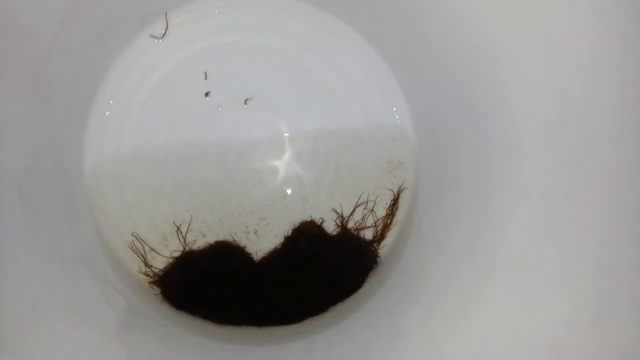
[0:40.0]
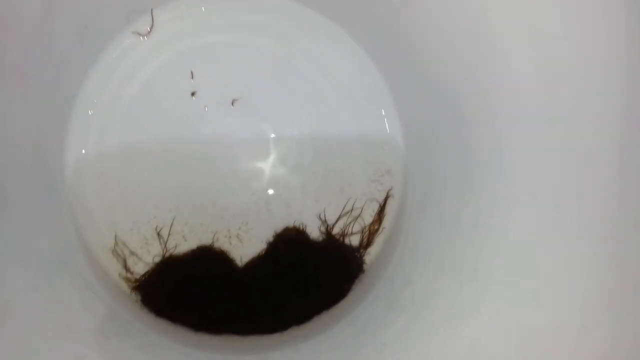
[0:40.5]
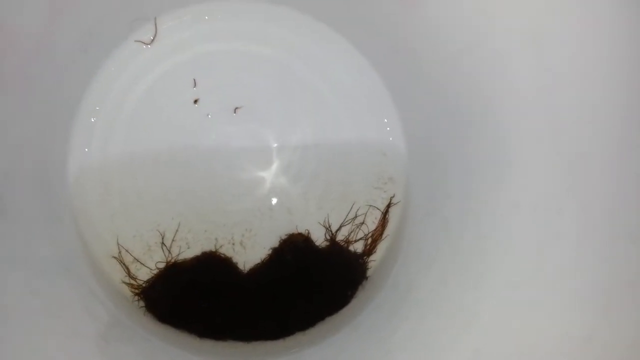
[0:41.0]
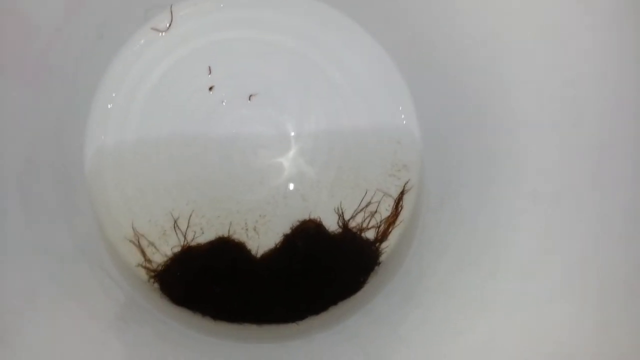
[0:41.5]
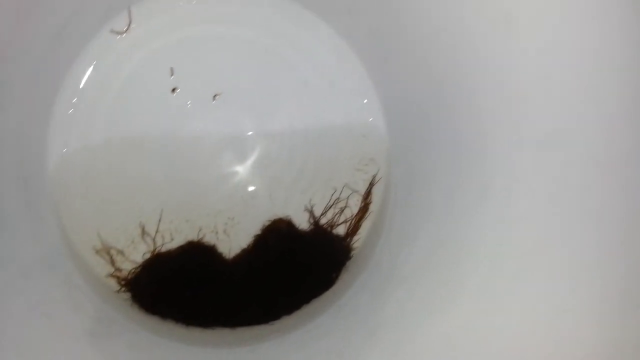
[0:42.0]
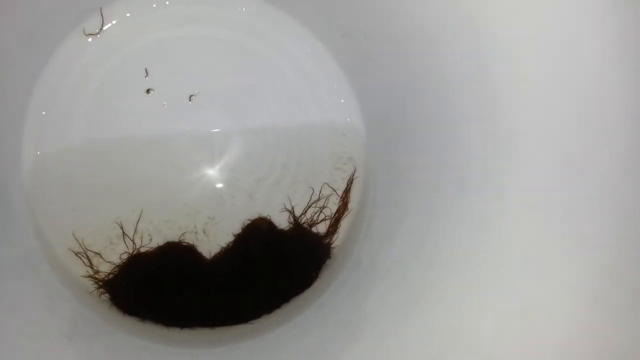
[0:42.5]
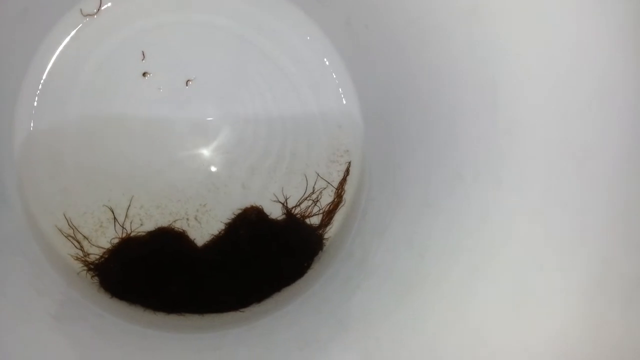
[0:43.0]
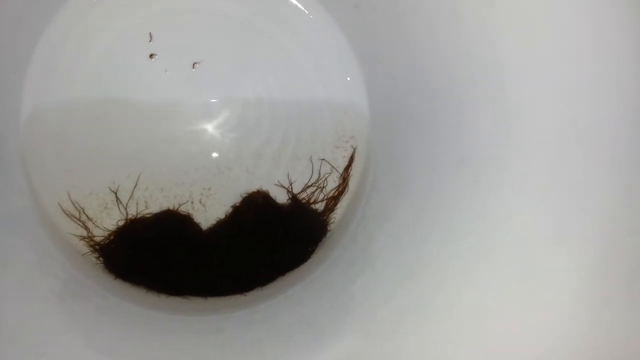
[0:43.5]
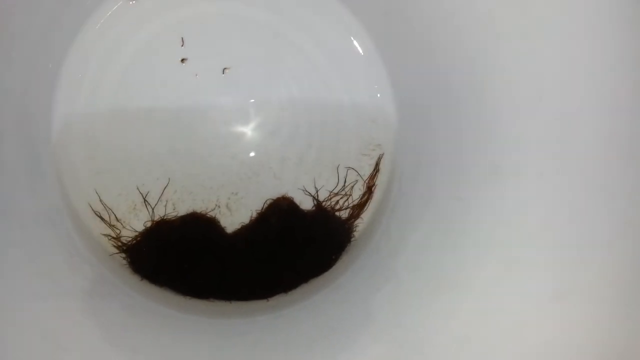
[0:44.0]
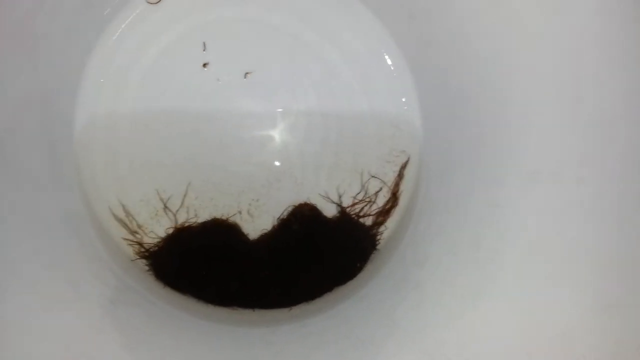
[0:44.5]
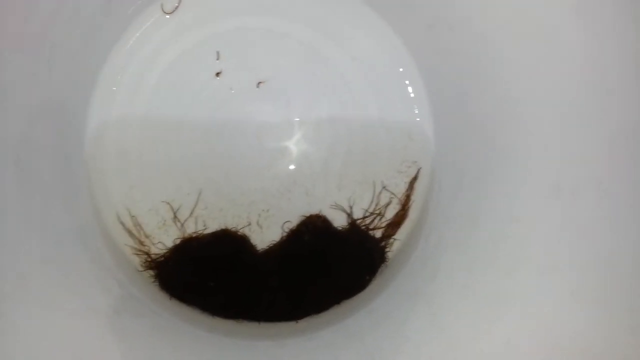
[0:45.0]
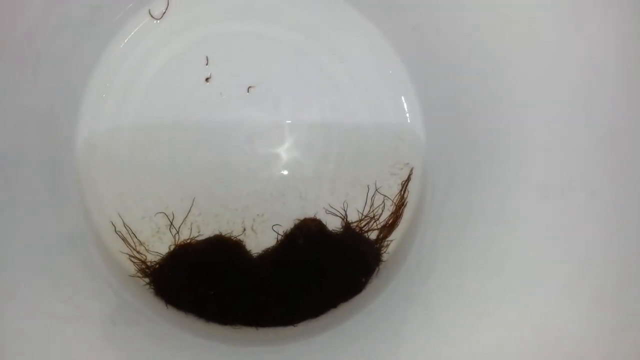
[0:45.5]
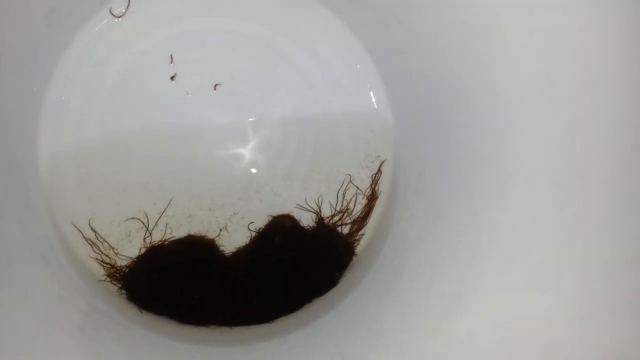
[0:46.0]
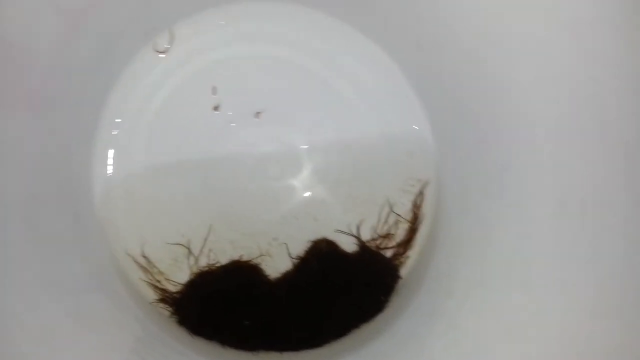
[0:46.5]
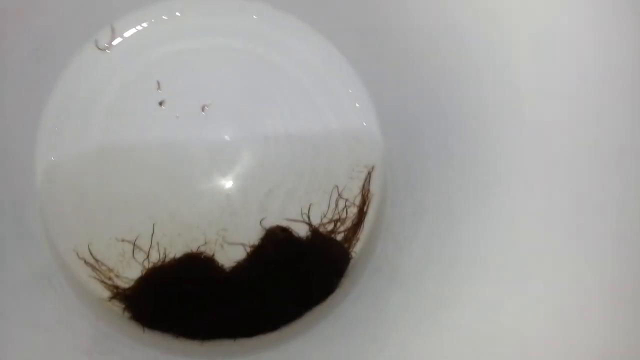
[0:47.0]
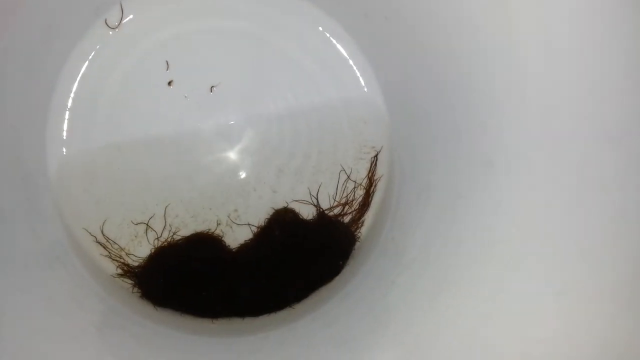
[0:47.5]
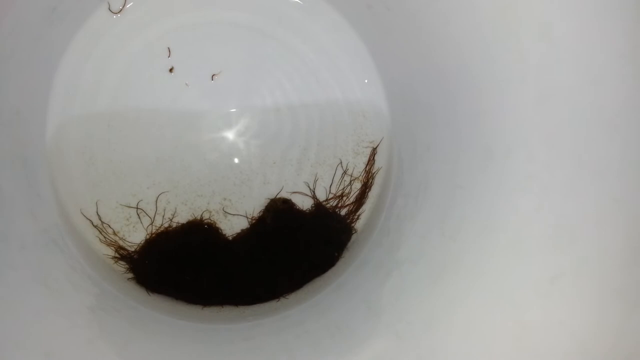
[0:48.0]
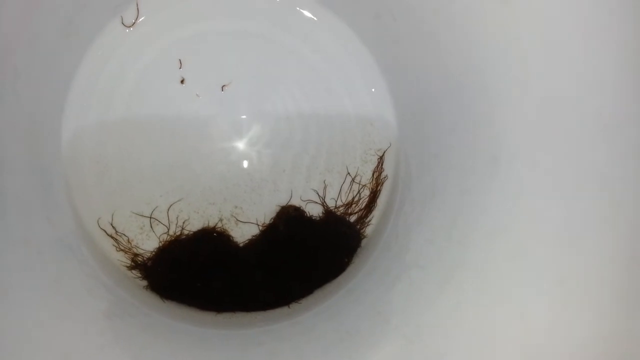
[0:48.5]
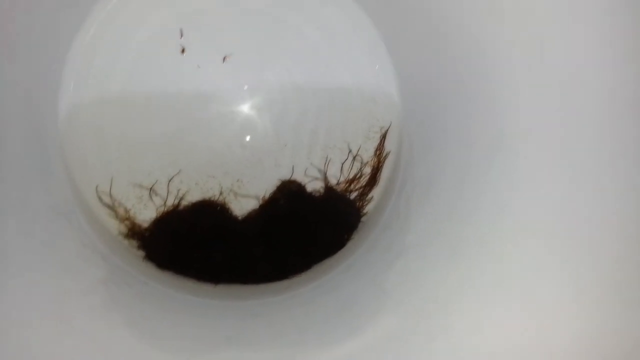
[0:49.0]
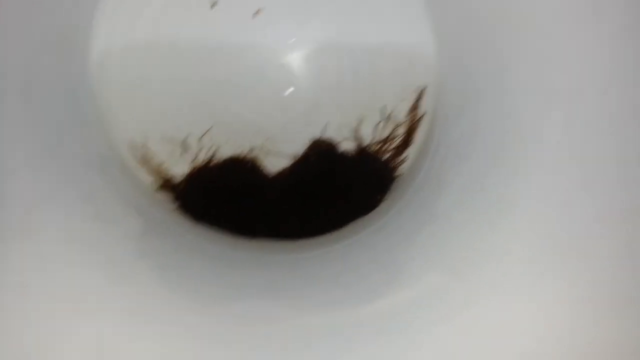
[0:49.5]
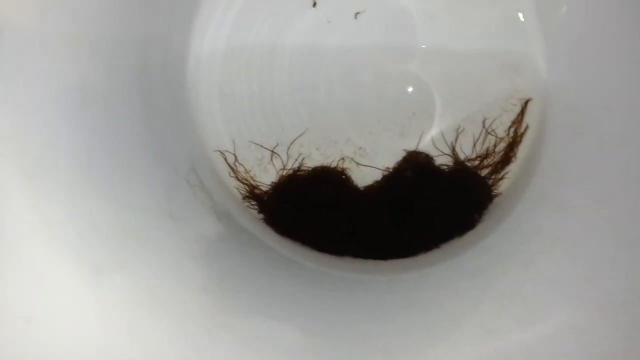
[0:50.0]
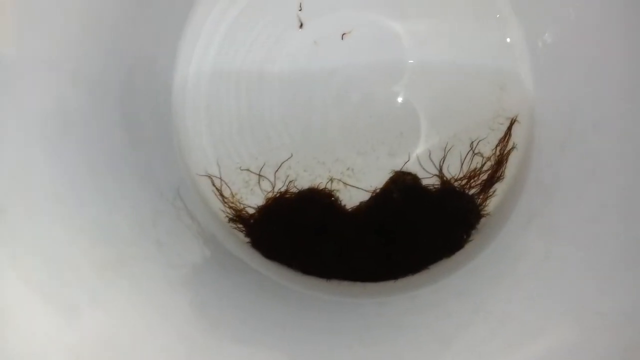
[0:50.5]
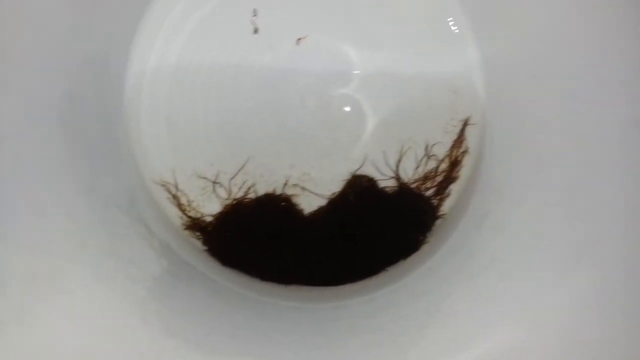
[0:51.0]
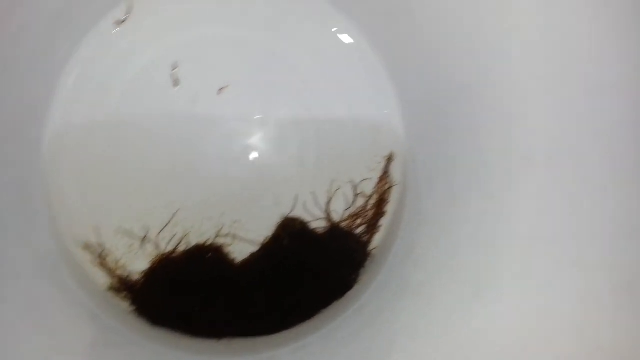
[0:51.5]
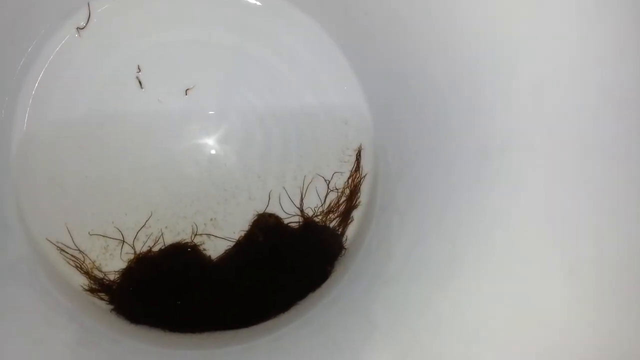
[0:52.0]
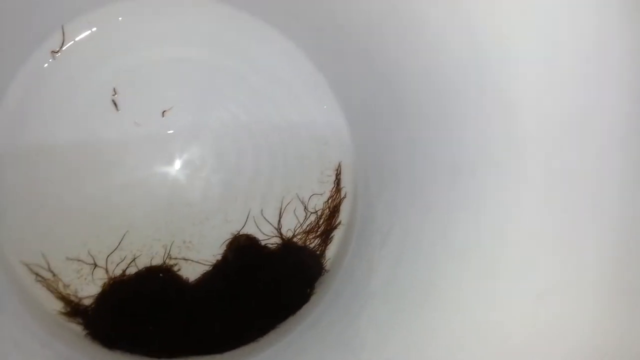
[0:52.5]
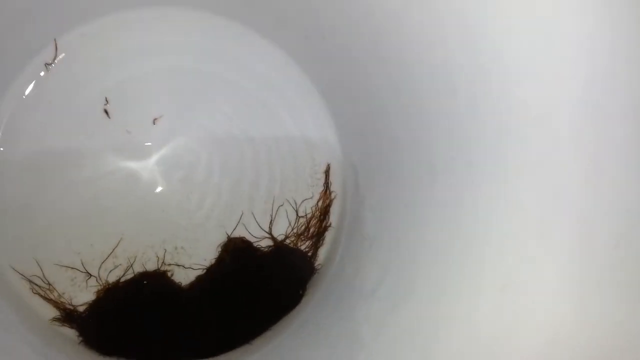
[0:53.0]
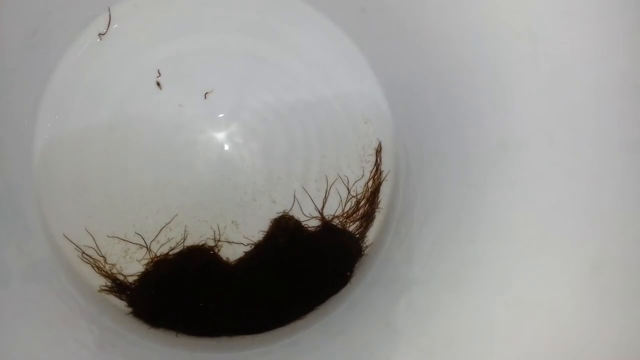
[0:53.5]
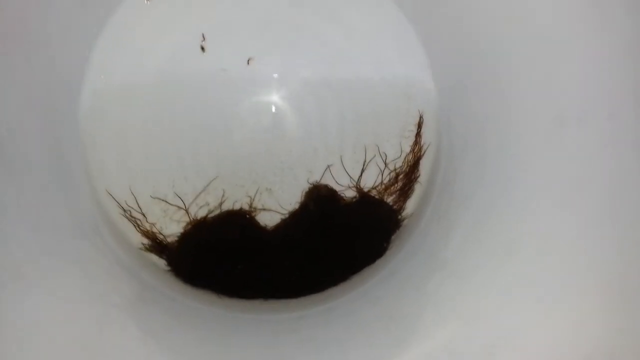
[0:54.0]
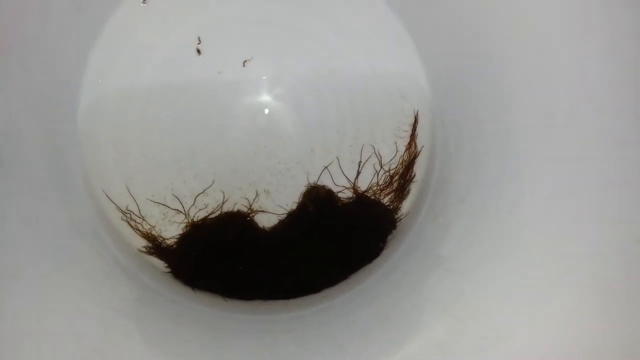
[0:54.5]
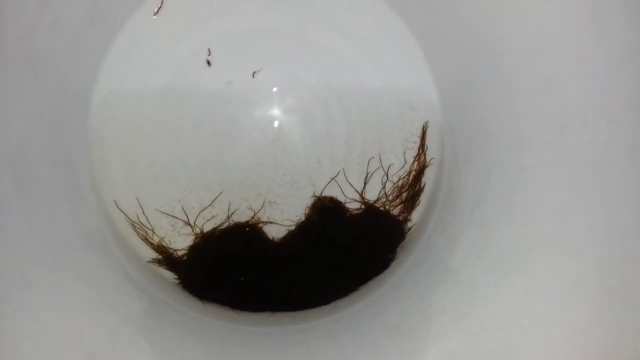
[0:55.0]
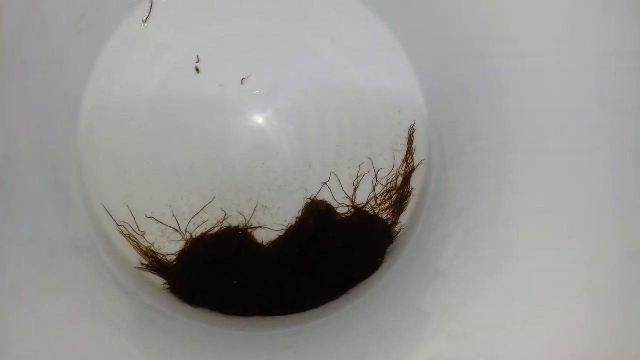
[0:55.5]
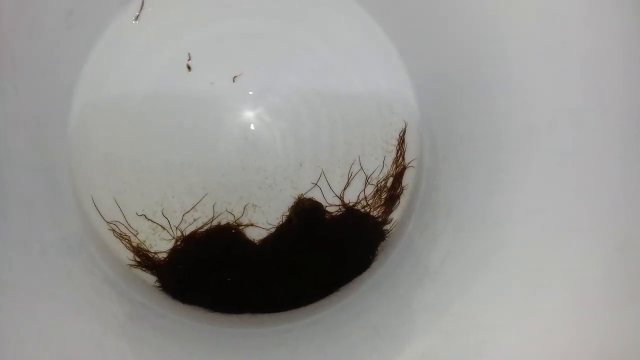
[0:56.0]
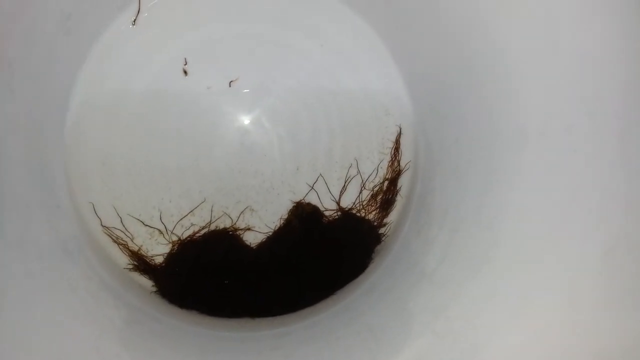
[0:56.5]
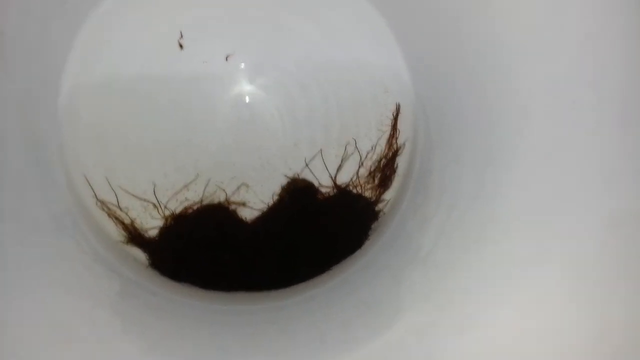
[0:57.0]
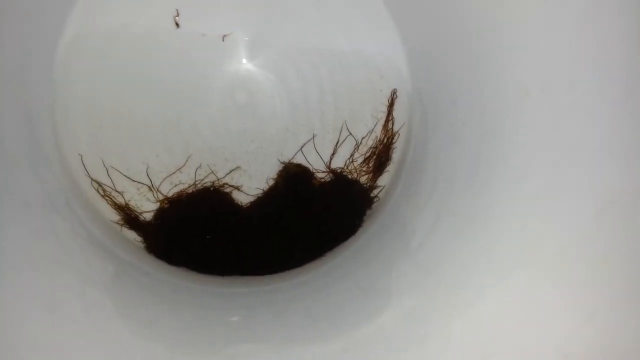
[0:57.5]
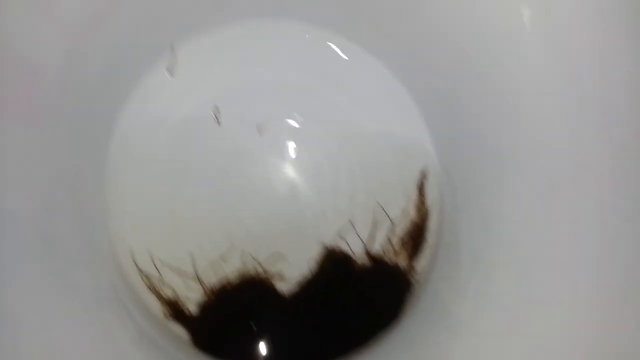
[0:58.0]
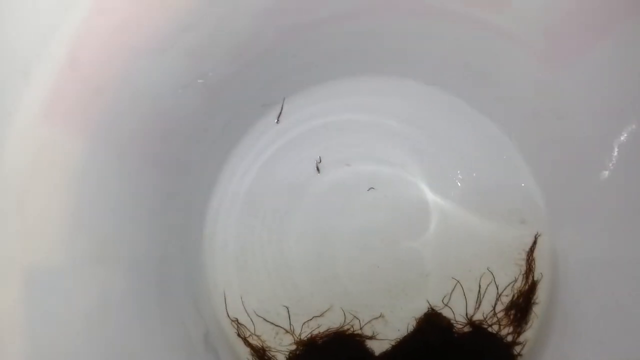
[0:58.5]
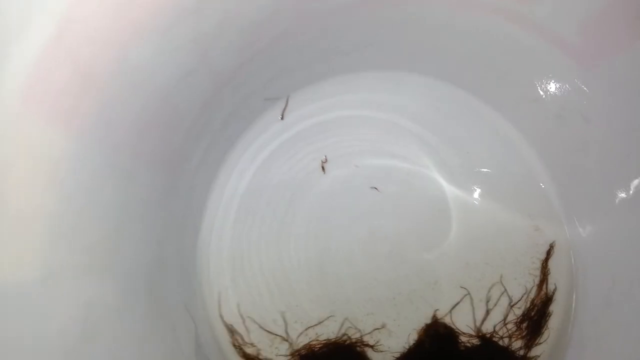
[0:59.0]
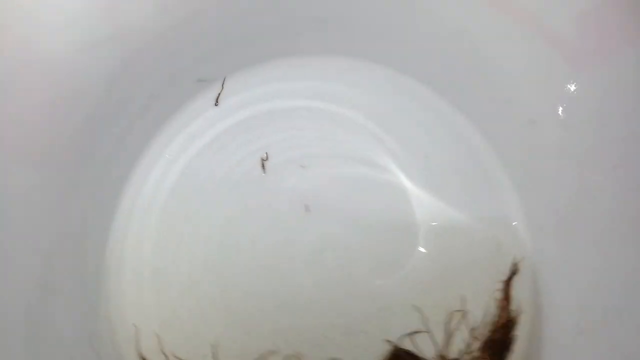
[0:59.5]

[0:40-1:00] The person keeps moving the cup around, and only its inside is shown: white walls, a white base, and water with the algae-like substance, which has some sort of strings or roots. The water level is low, and because the cup is tilted, the water has shifted to the lower side. The water is somewhat dirty at the bottom, where the fluffy algae-like substance is. Chunks of residue left by the substance remain on the upper part of the cup from when the water shifted down. The person wobbles the cup around, but the water does not reach high enough to drag these chunks down.